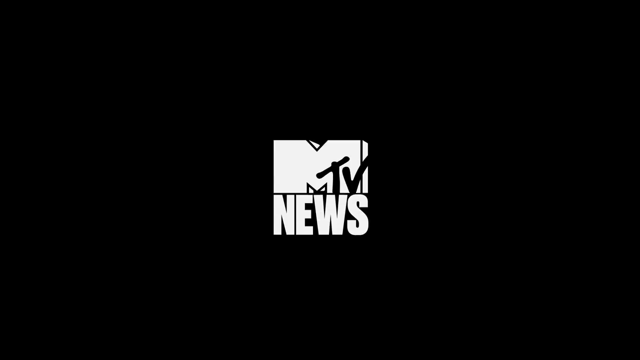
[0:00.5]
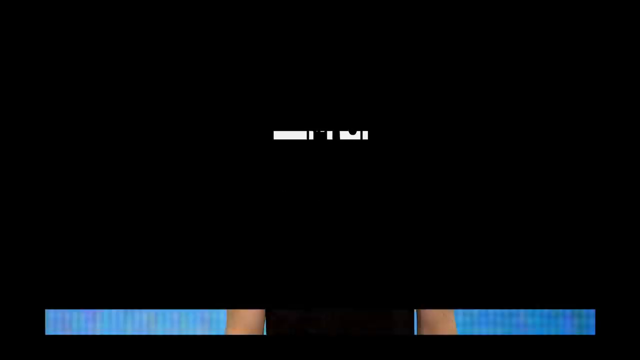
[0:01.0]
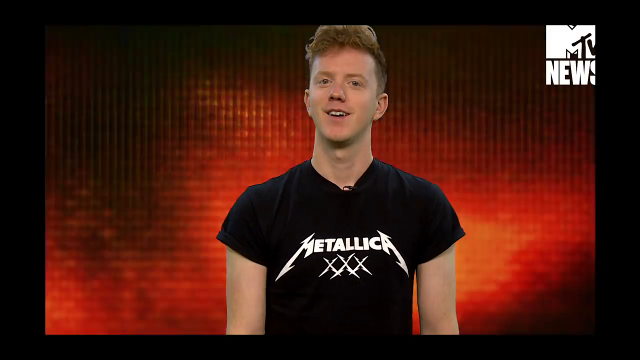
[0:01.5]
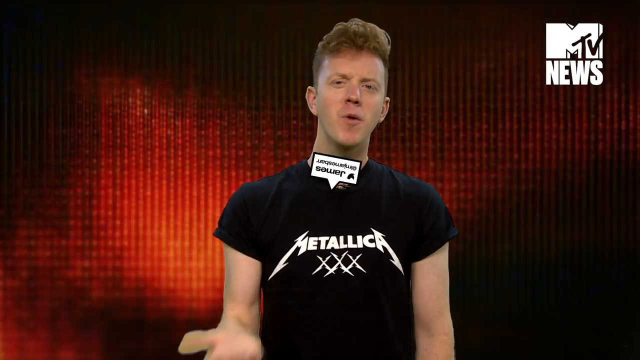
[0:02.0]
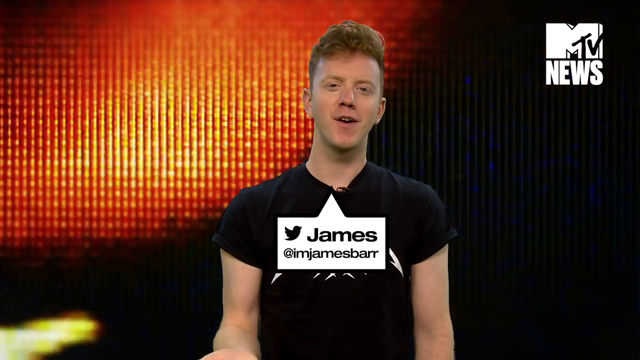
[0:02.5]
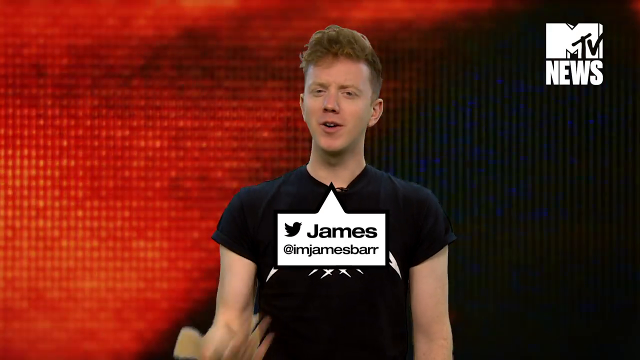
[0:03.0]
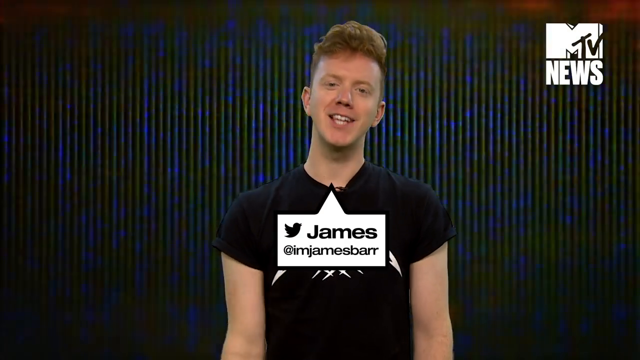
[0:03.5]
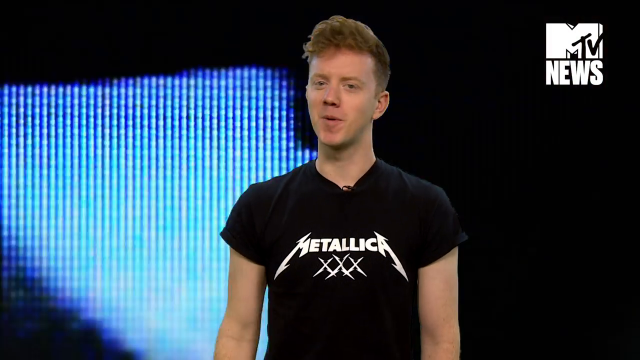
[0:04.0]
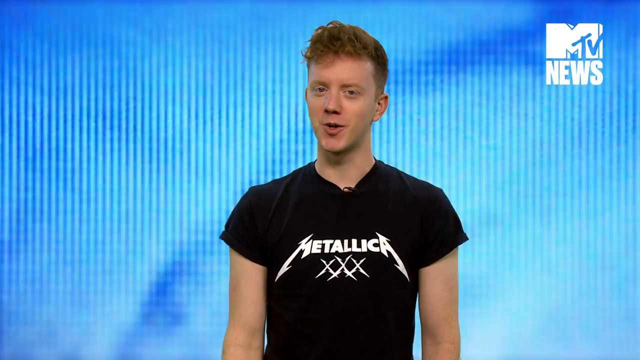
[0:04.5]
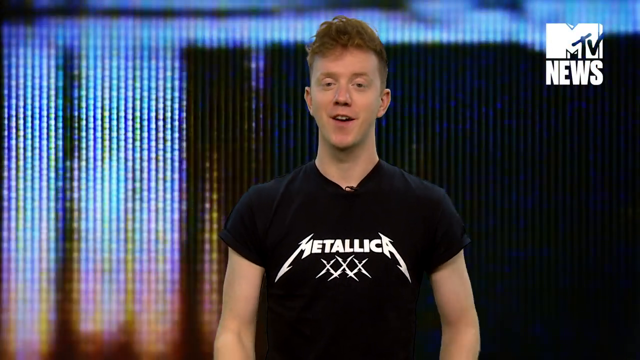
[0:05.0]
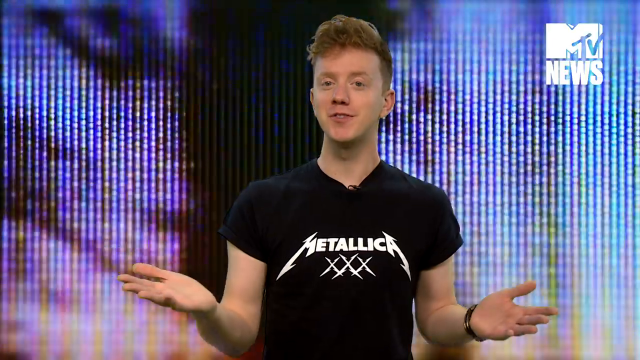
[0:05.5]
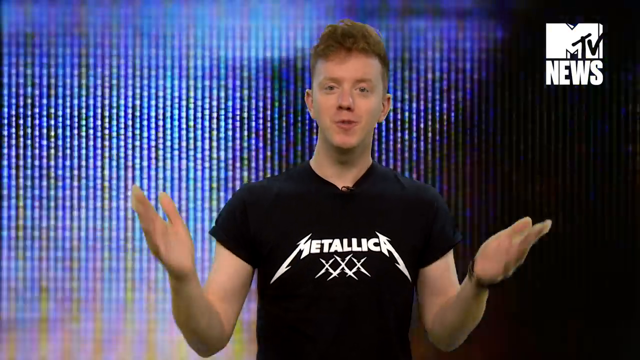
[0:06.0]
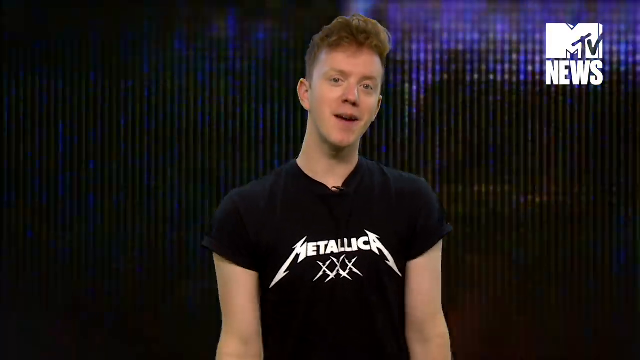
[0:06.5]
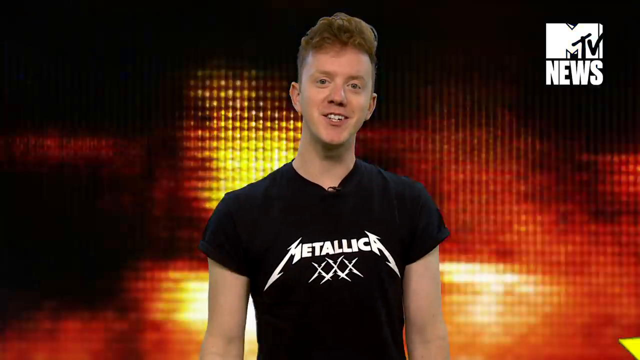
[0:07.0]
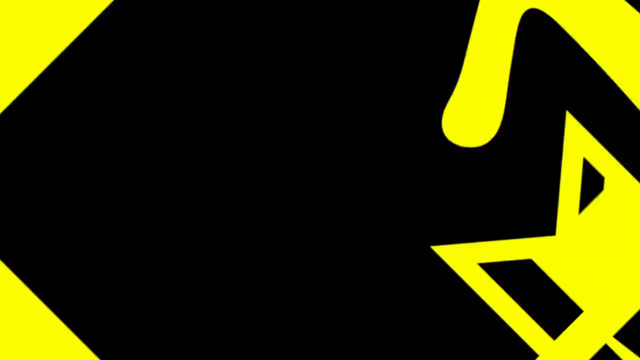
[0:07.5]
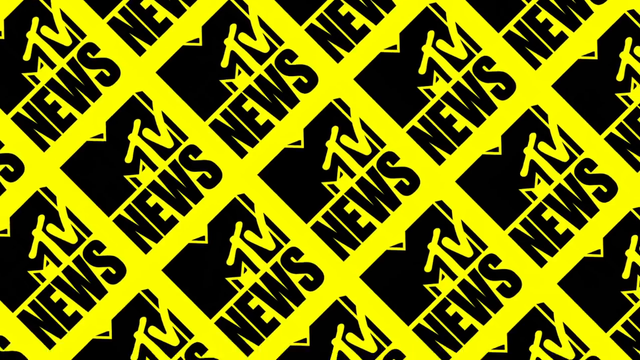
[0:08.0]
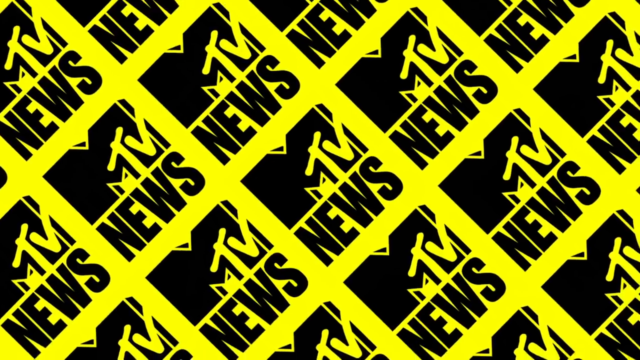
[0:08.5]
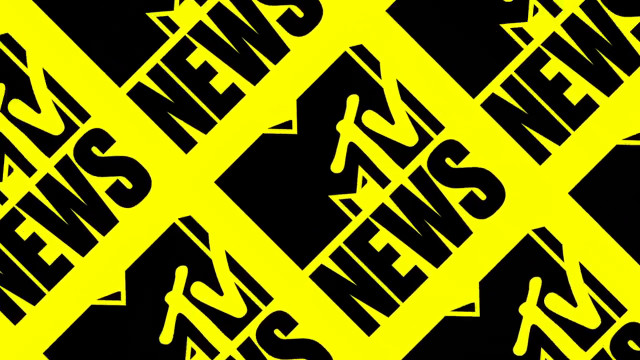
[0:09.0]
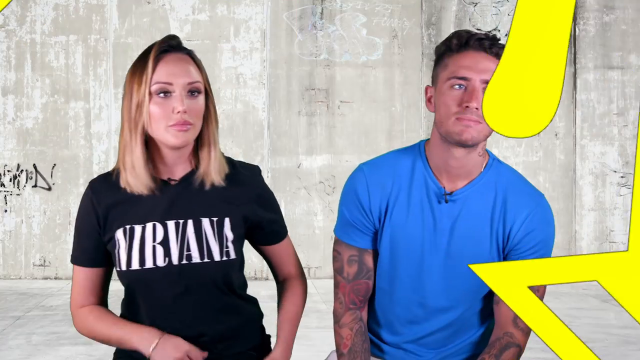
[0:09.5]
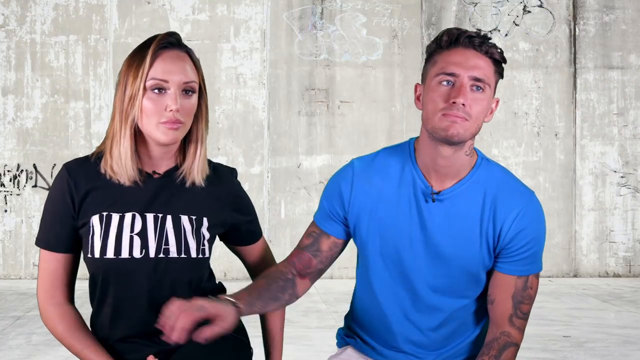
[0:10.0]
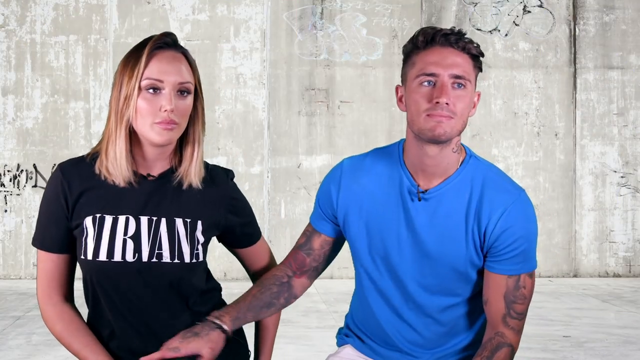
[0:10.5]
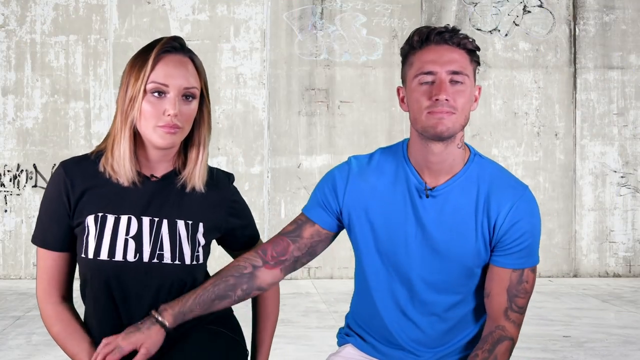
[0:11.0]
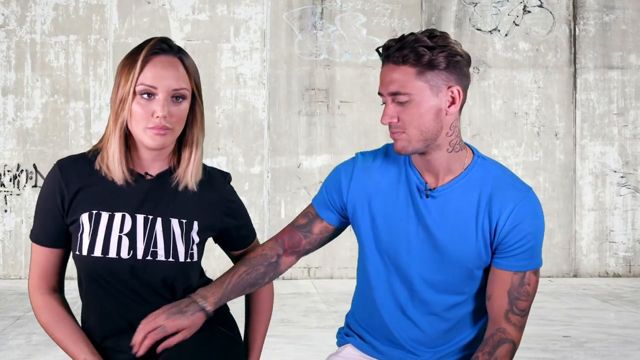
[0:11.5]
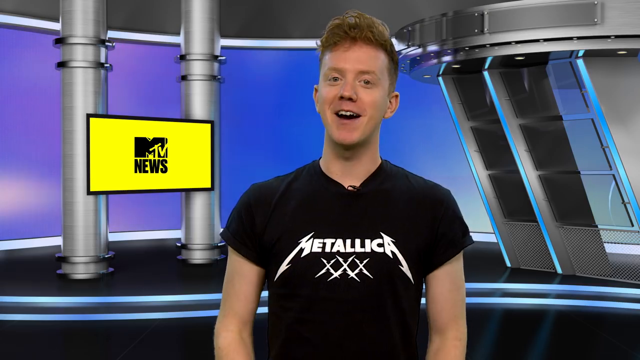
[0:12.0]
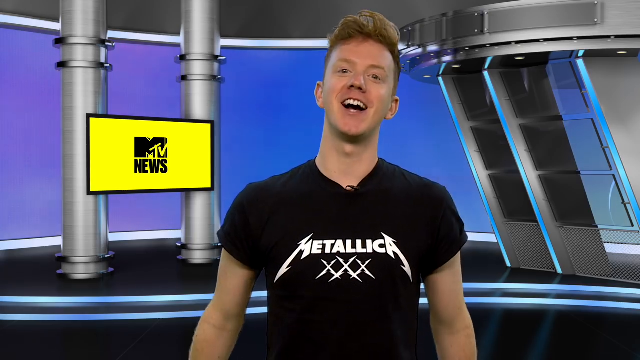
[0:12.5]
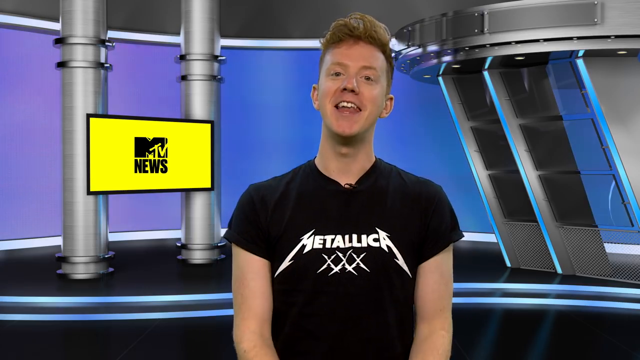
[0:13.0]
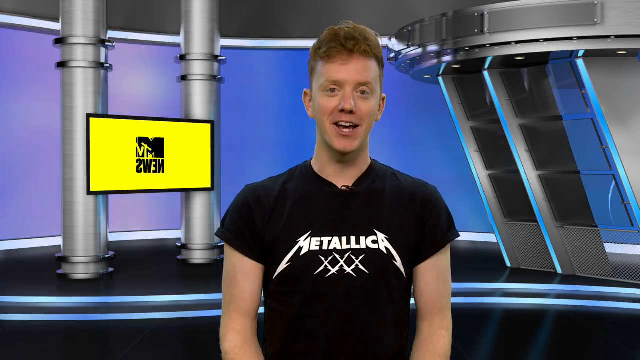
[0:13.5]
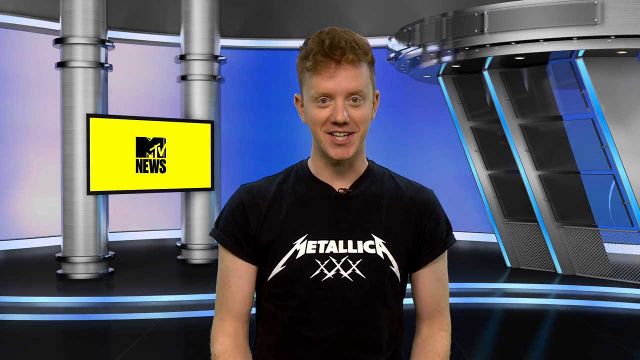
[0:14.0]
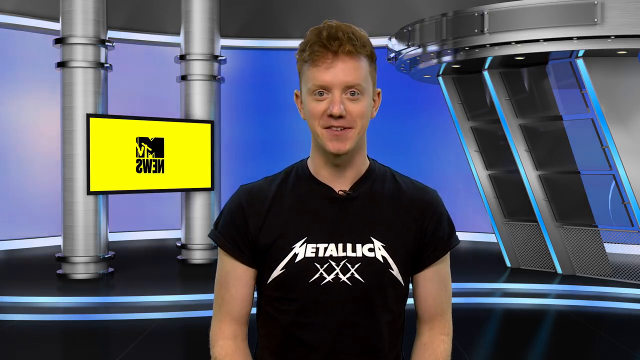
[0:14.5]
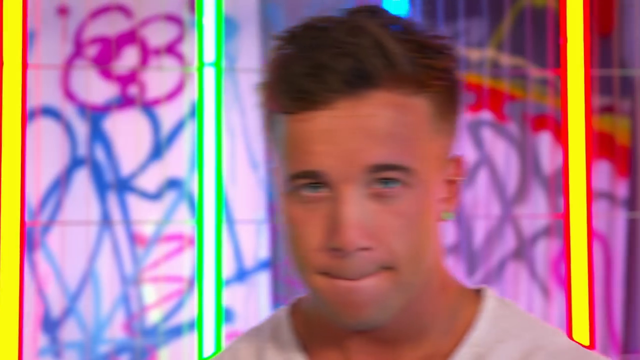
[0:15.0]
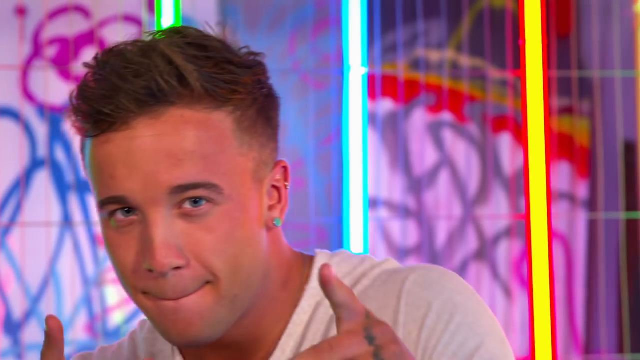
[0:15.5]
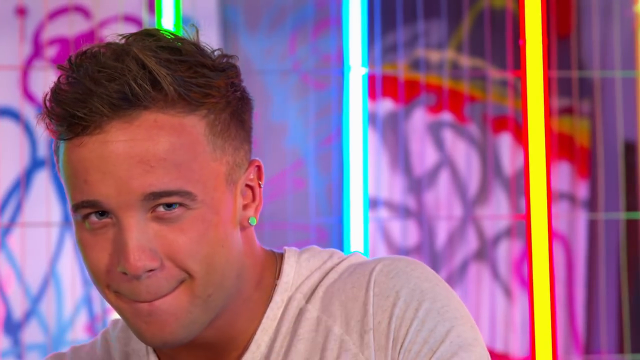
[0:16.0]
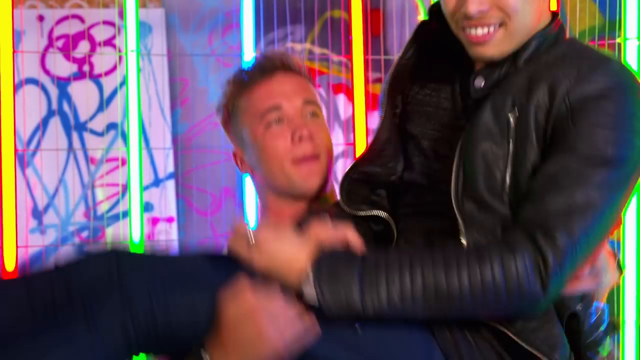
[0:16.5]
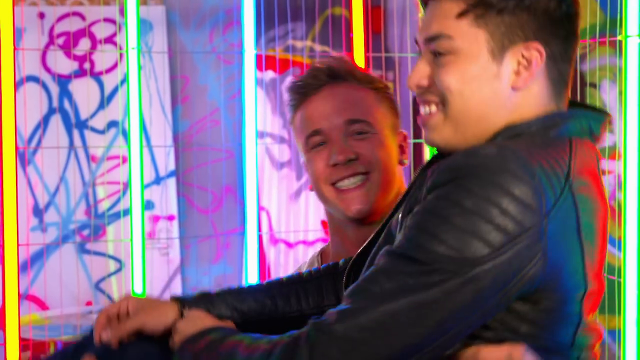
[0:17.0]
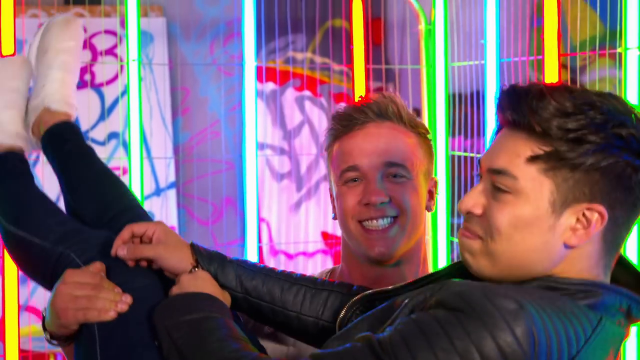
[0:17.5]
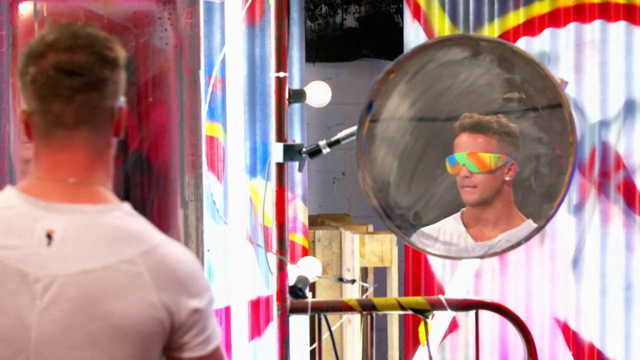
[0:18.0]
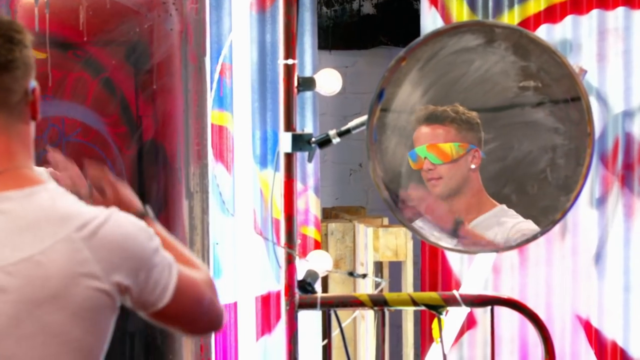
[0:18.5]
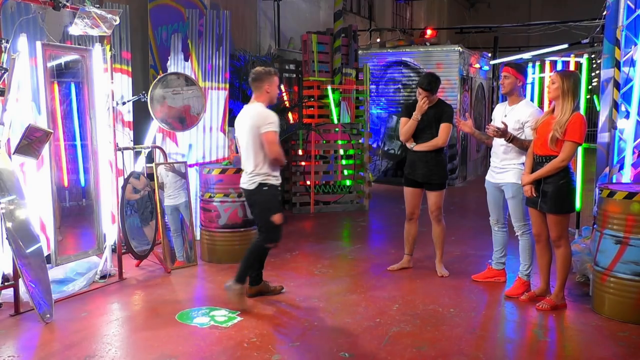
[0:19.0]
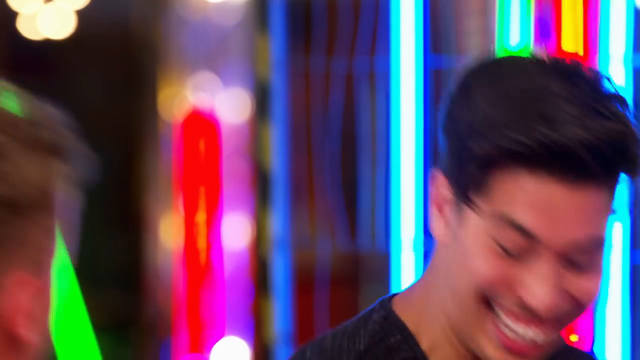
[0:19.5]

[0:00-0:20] The video opens on an MTV News background, a kind of black background with a white MTV News logo. A man appears wearing a black shirt with white metallic text and three X's on it. He is Caucasian, between 20 and 25, with short brownish-red hair, and he seems to be explaining something. The video cuts to a screen with a black and yellow MTV News icon, then to two people: a man in a blue shirt, probably 25 to 35, and a woman, 25 to 40, to his left. The woman wears a Nirvana shirt and has short black hair; both are Caucasian, and the man has tattoo sleeves on both arms. The video returns to the first man in the Metallica shirt, with the MTV News background behind him in a kind of green-screen-esque, YouTube-style studio area. It then moves to another screen showing a different man, another man, and four different people in frame.